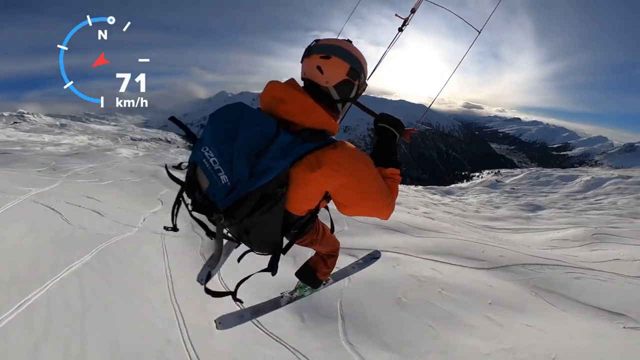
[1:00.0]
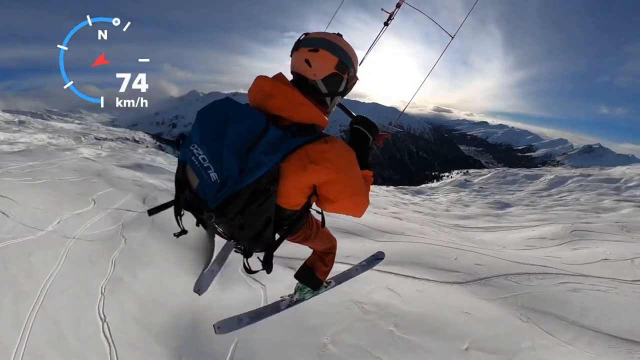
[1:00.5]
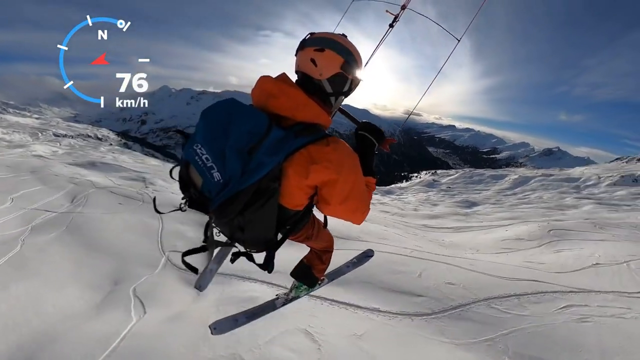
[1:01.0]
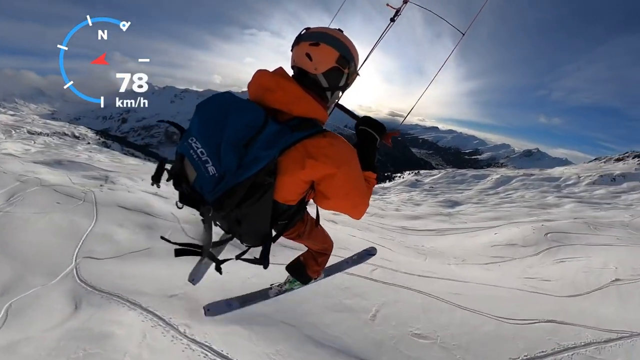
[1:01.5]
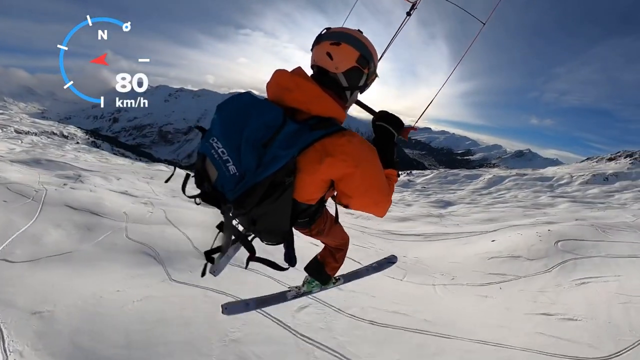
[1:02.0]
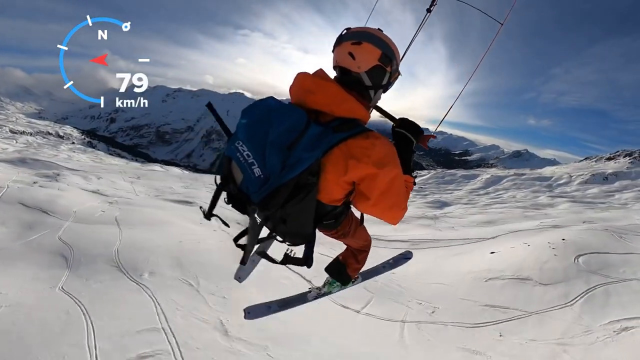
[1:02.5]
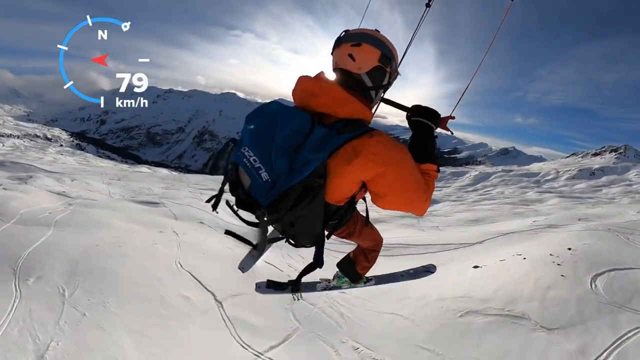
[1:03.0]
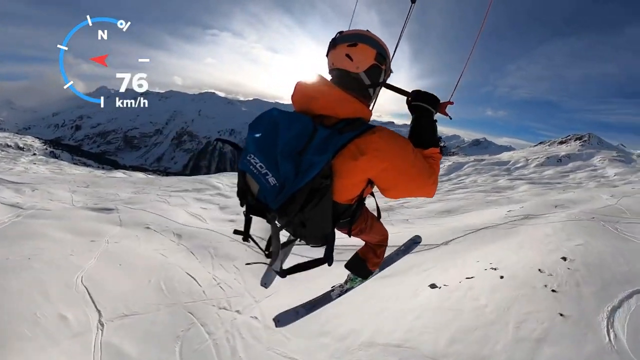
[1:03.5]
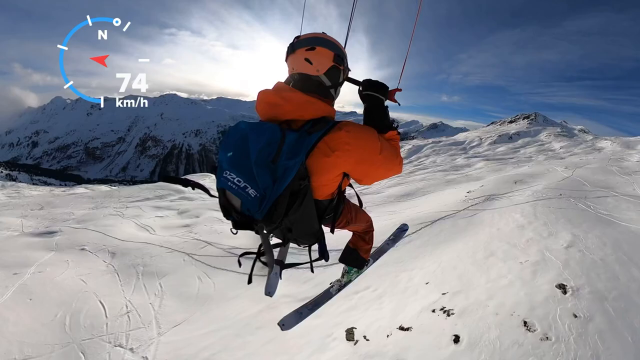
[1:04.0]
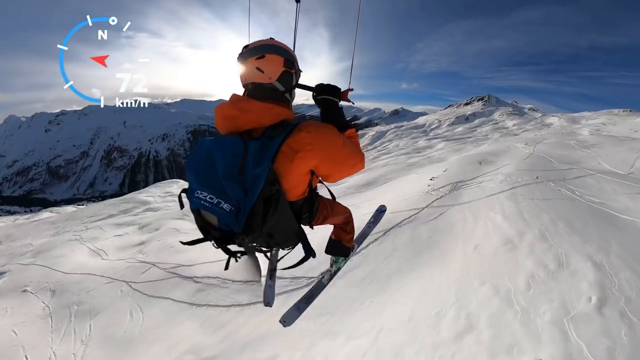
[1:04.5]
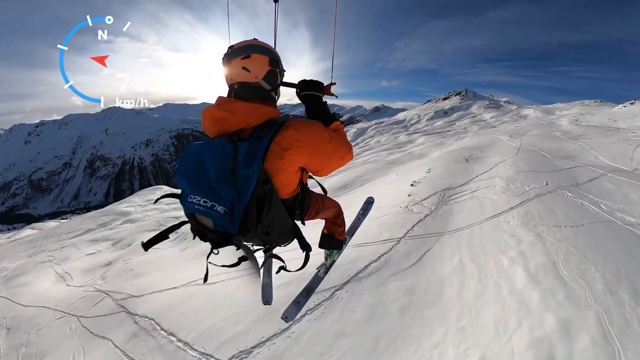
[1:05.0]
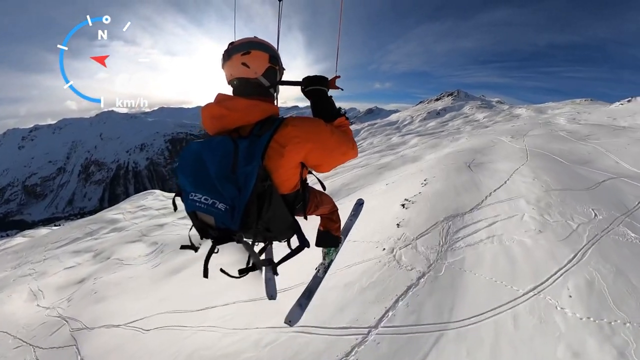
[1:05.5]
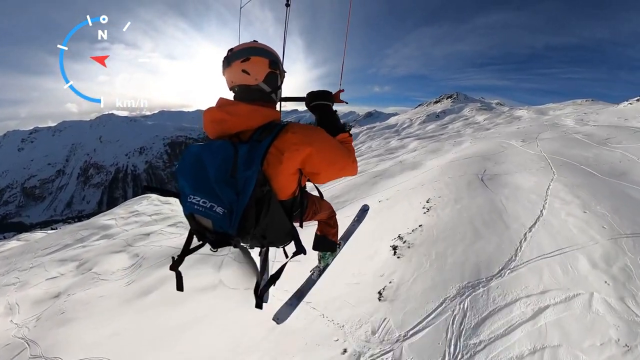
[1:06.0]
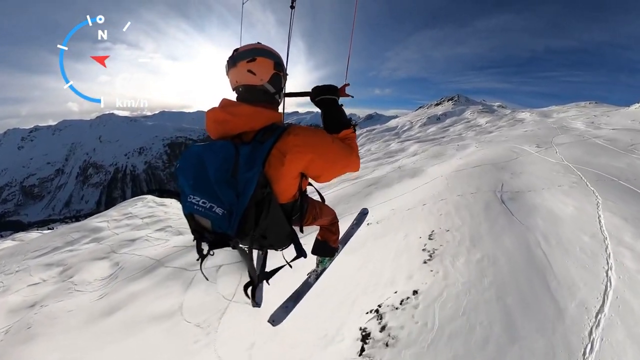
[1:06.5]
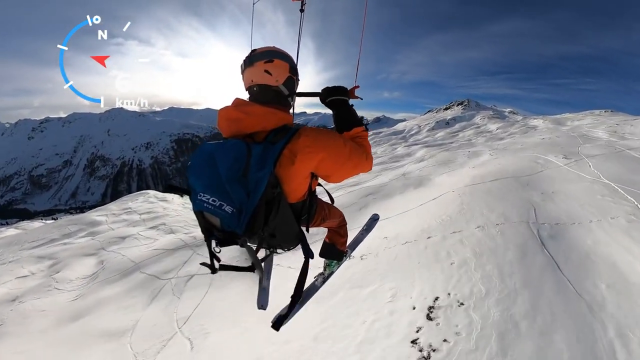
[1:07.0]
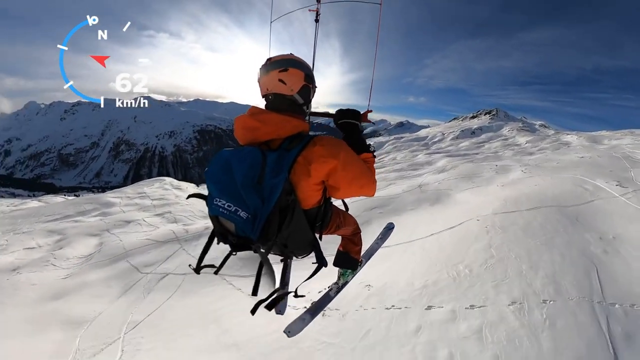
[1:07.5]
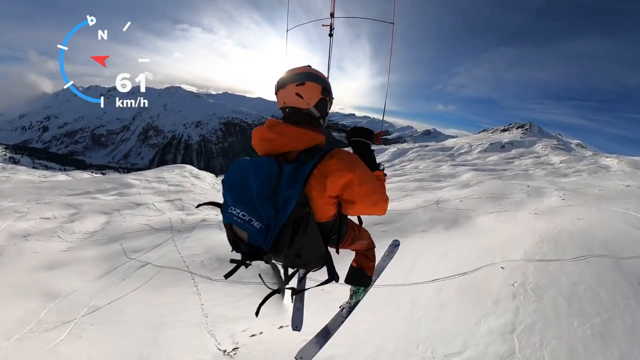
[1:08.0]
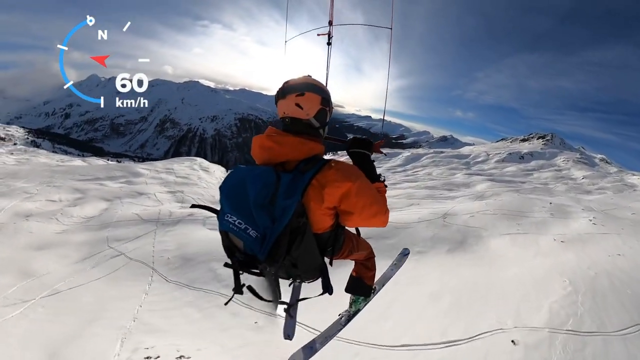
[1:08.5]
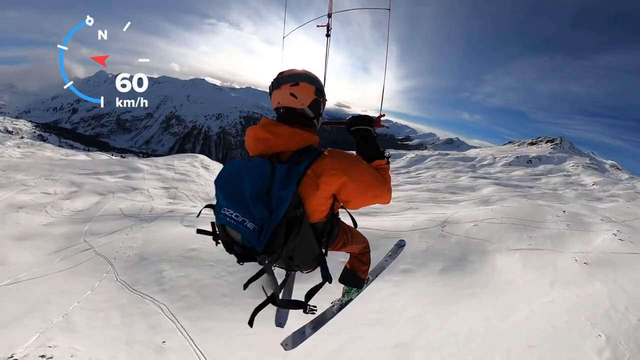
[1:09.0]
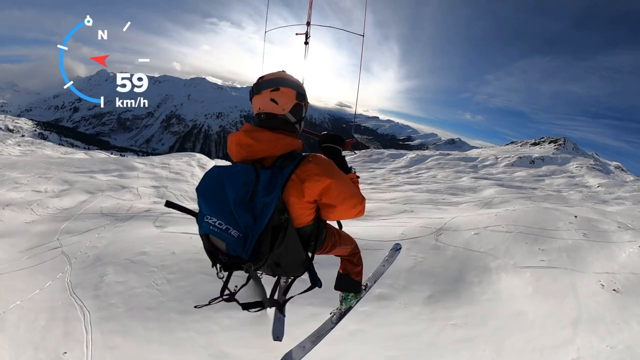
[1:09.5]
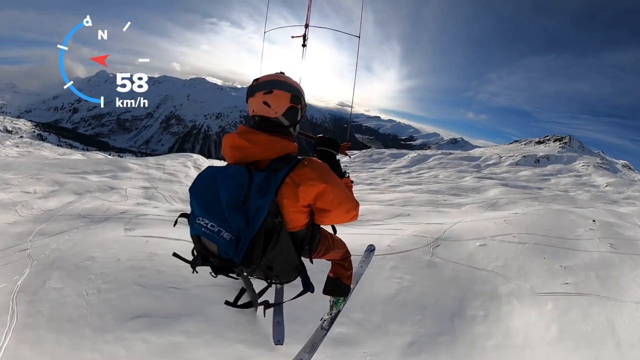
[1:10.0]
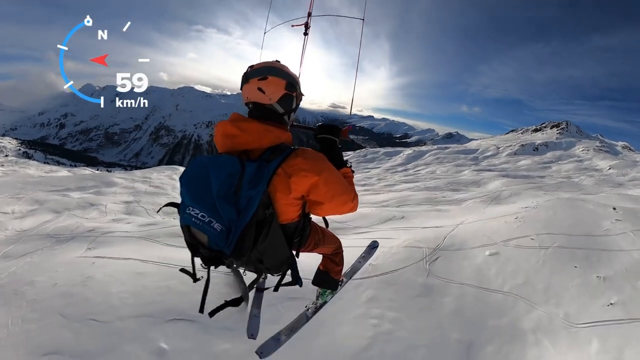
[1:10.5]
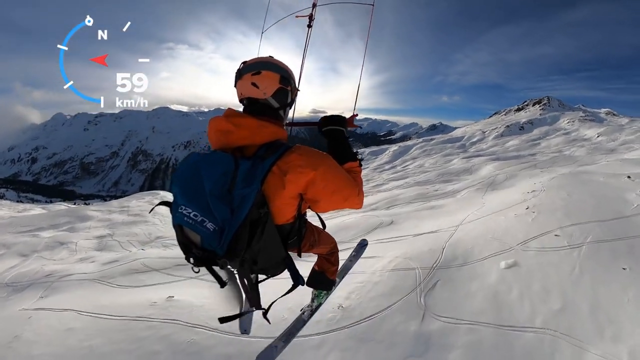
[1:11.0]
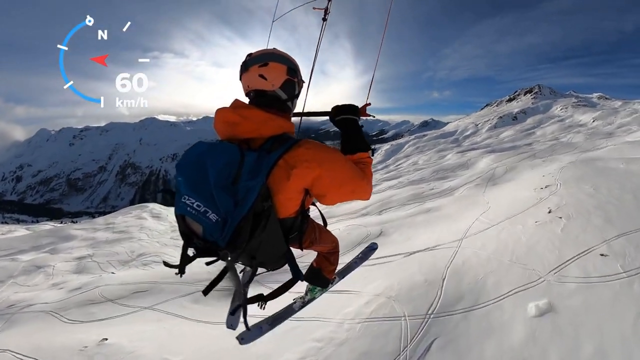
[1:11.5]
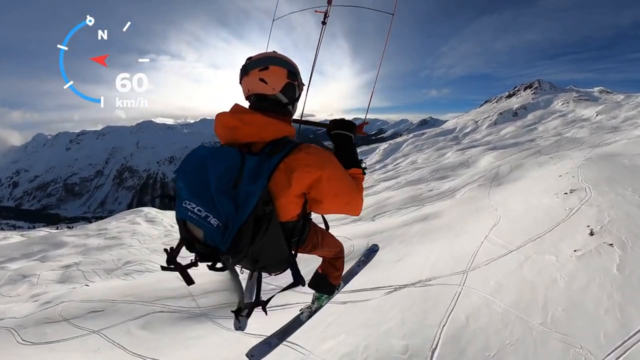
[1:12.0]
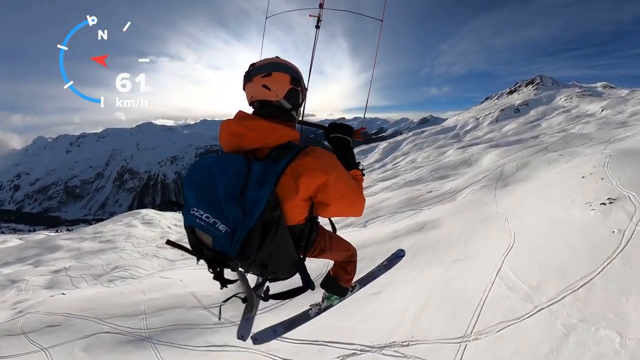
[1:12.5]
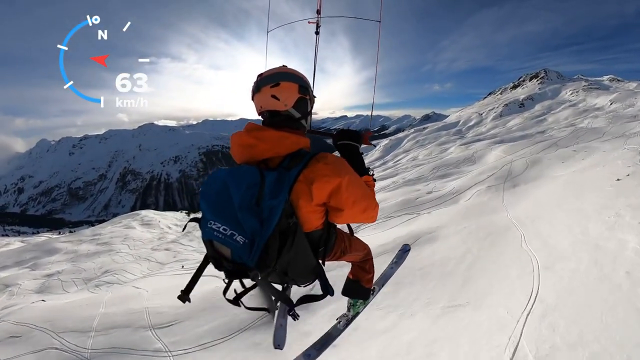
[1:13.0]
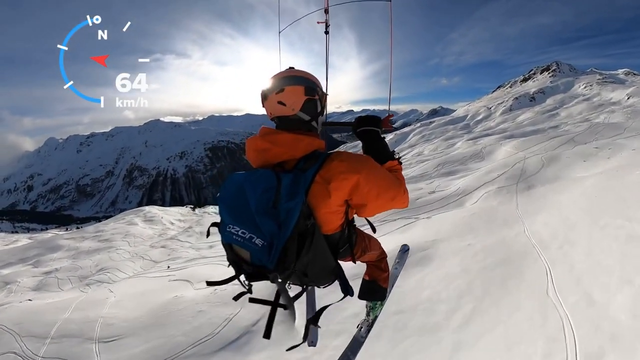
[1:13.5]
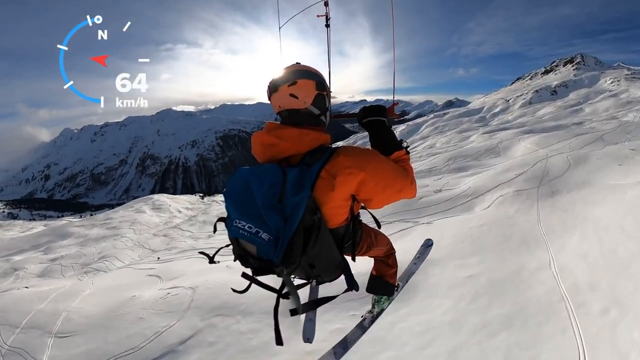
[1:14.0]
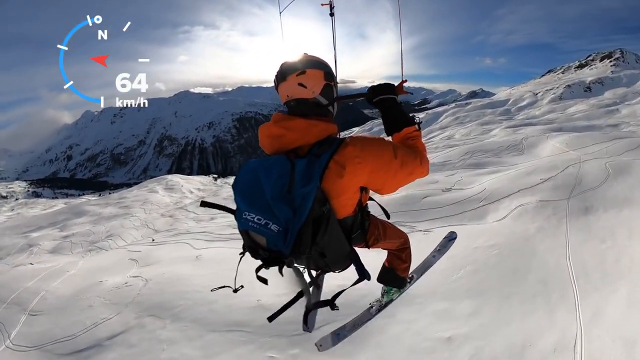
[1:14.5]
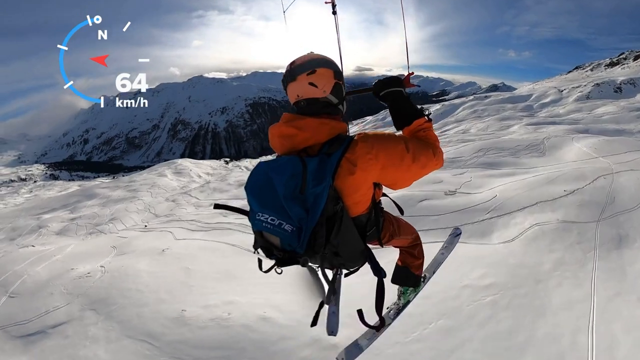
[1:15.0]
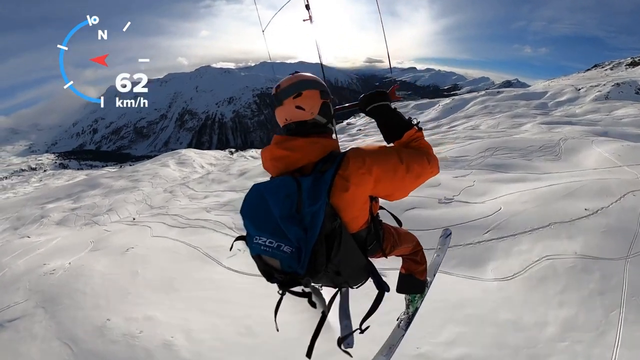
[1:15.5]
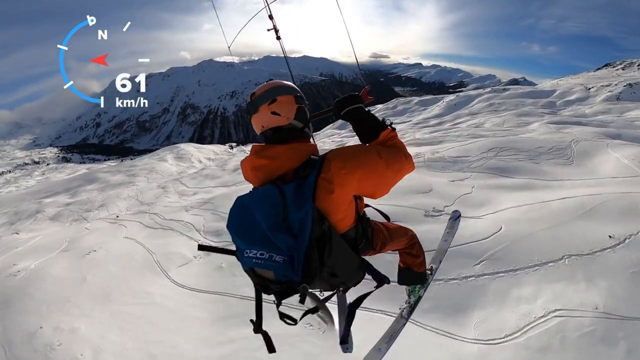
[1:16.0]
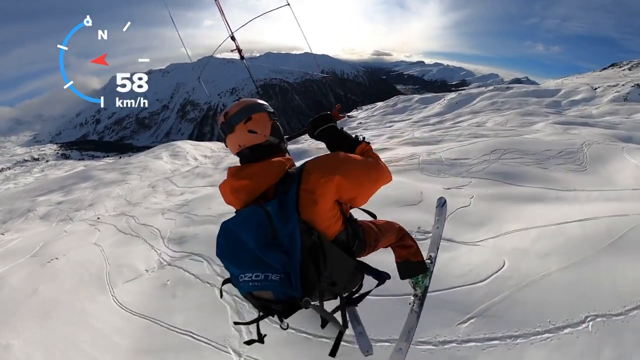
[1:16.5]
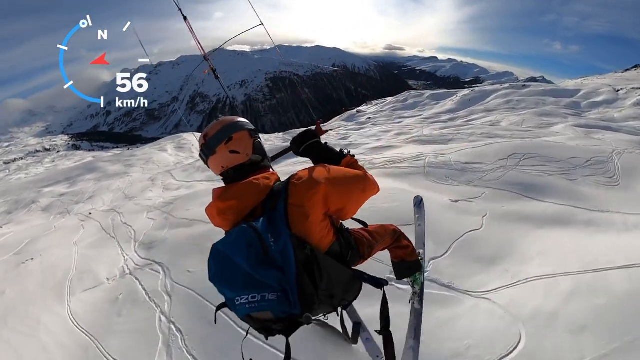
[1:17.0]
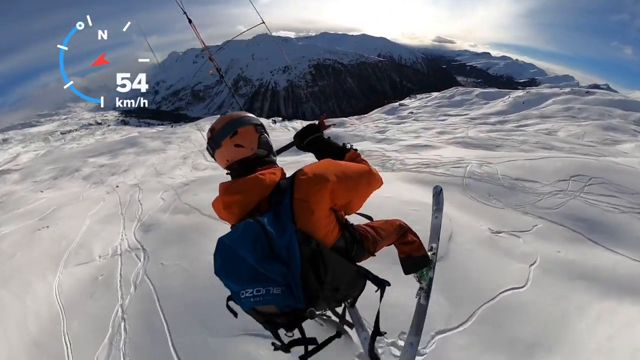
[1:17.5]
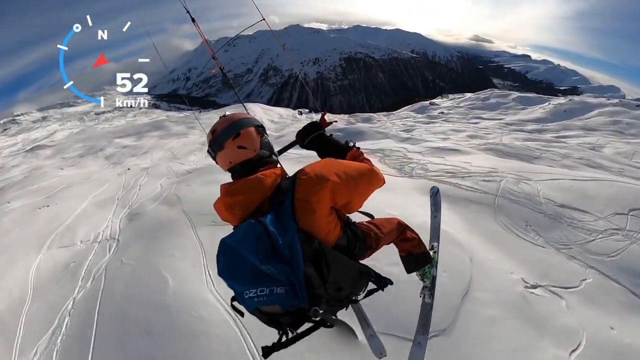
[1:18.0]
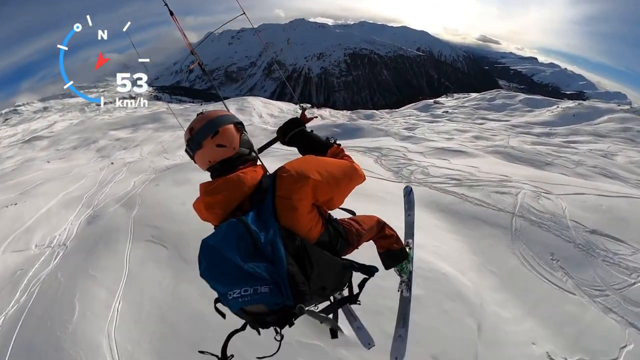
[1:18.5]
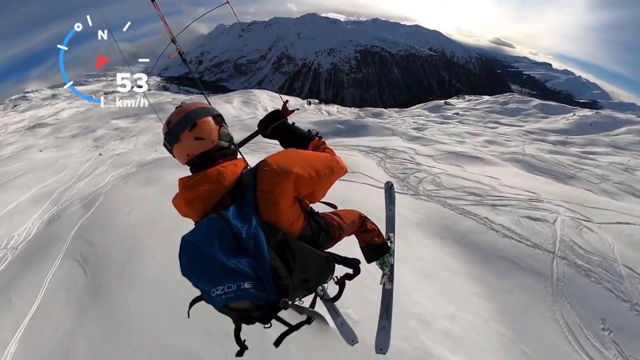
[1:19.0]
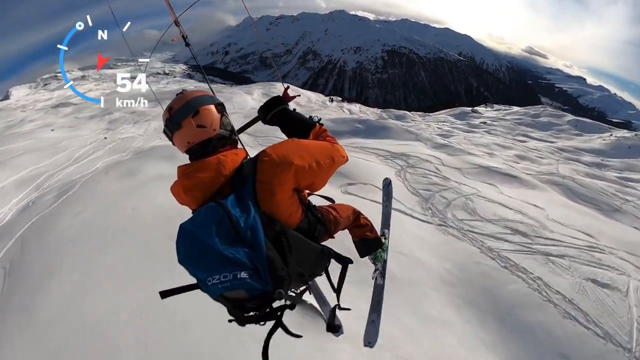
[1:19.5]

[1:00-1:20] The man is going 74 kilometers per hour on his skis as he paraglides, continuing to glide down the hill. He moves from the right to the left as he changes direction. The compass in the top left-hand corner shows the direction he is going; a red arrow in the middle of it starts off pointing to the west. The compass is blue with white circles and marks, and the kilometers per hour figure is in white. Little changes. The peaks of the mountain are visible, along with areas where the snow has been disturbed by skiers and large areas where the snow is undisturbed. There is nobody else in the video but the paragliding man.